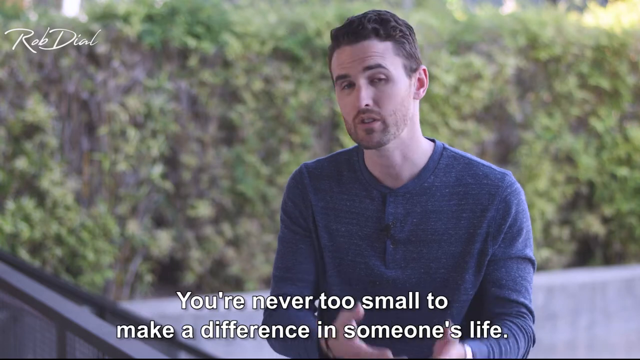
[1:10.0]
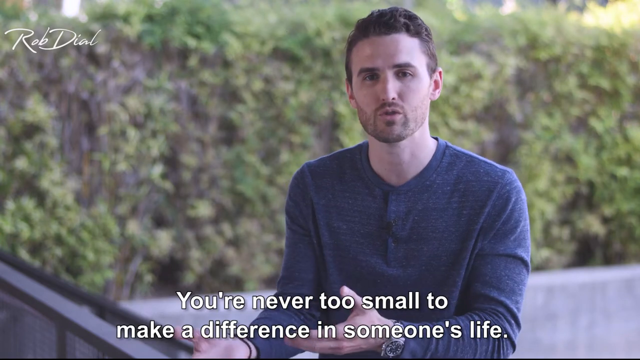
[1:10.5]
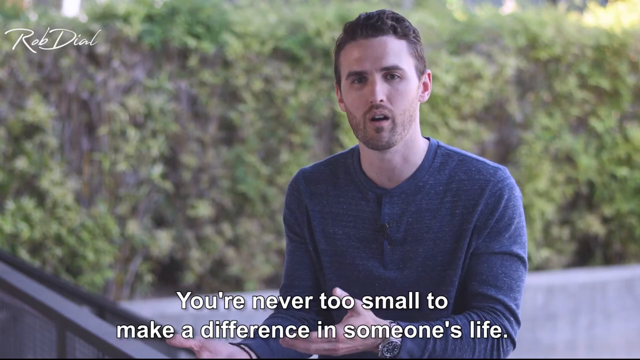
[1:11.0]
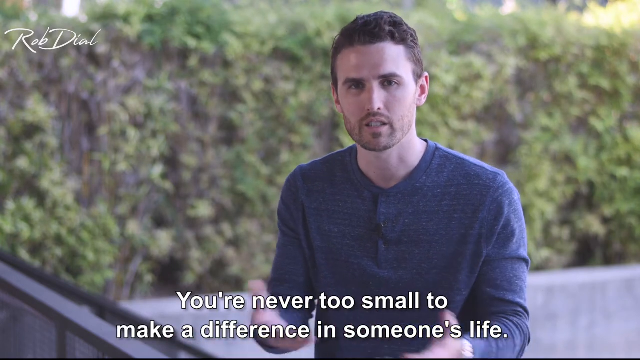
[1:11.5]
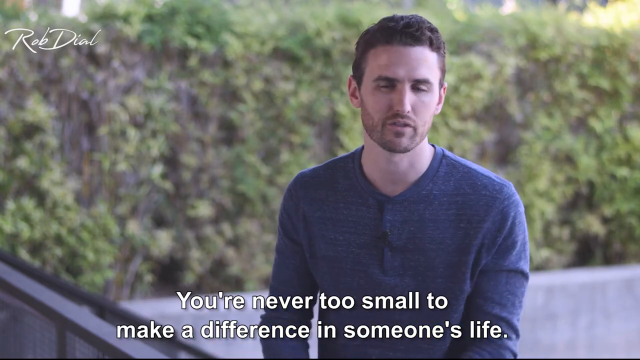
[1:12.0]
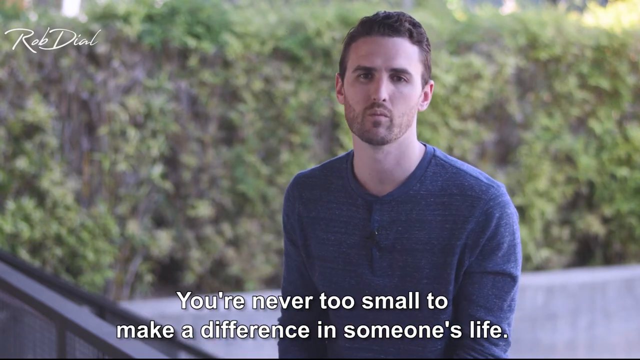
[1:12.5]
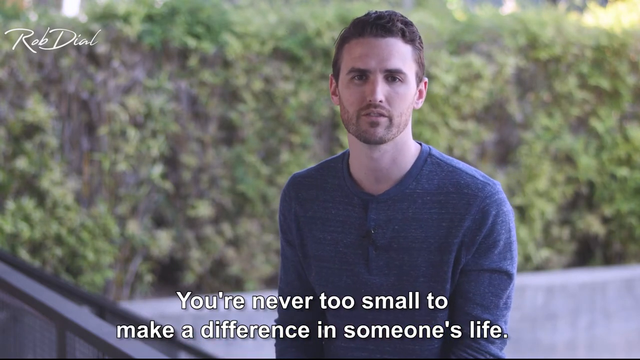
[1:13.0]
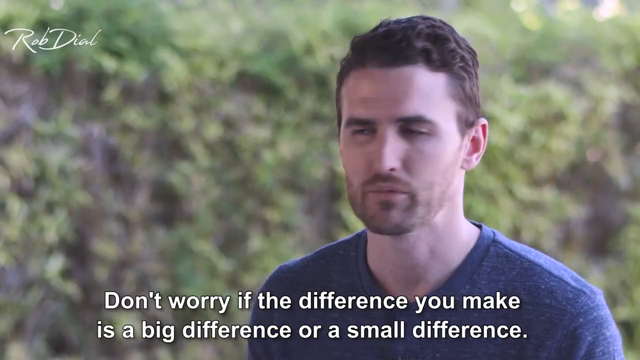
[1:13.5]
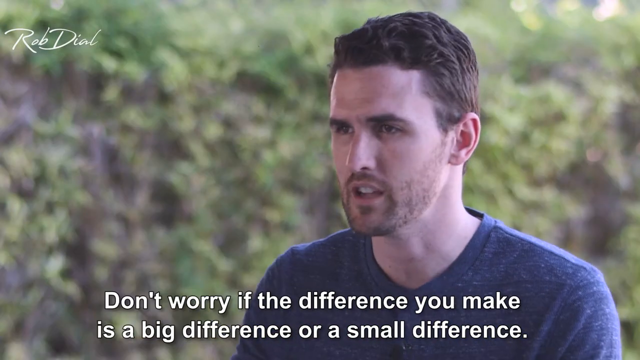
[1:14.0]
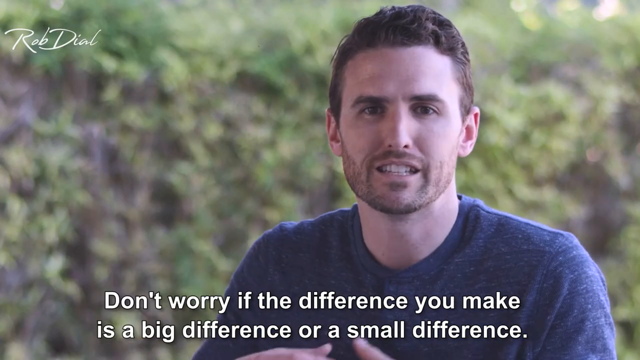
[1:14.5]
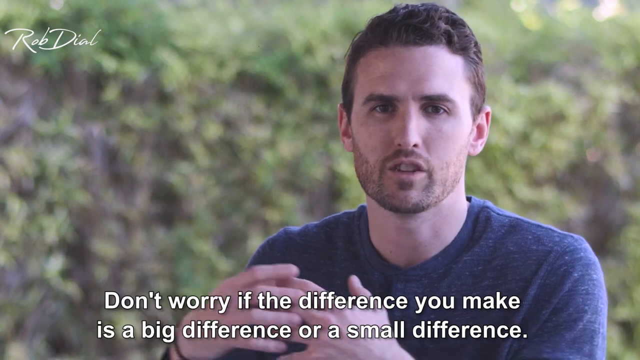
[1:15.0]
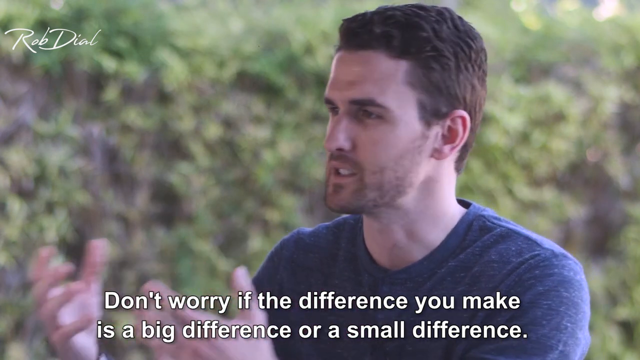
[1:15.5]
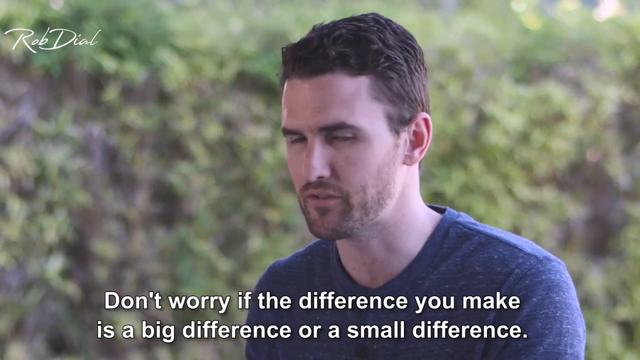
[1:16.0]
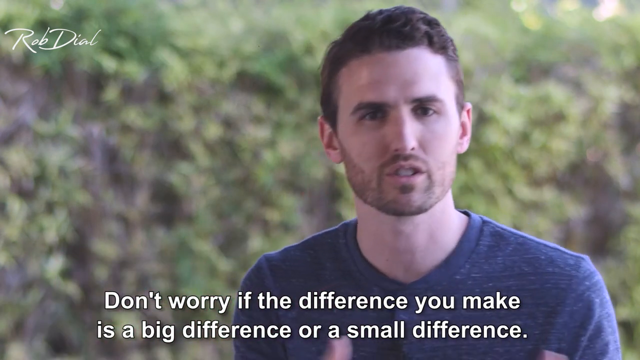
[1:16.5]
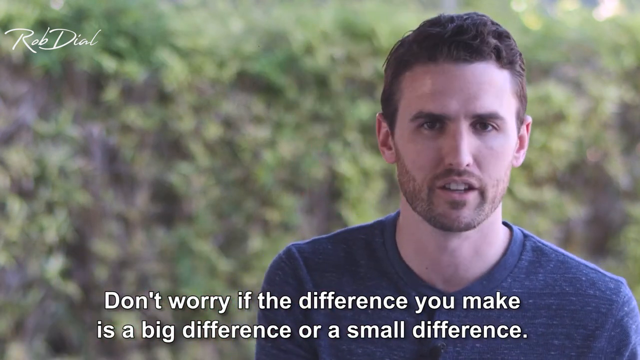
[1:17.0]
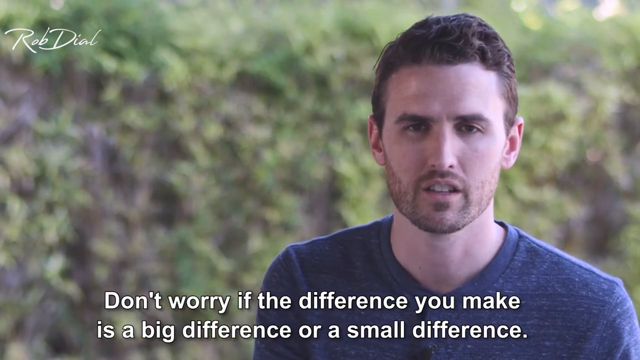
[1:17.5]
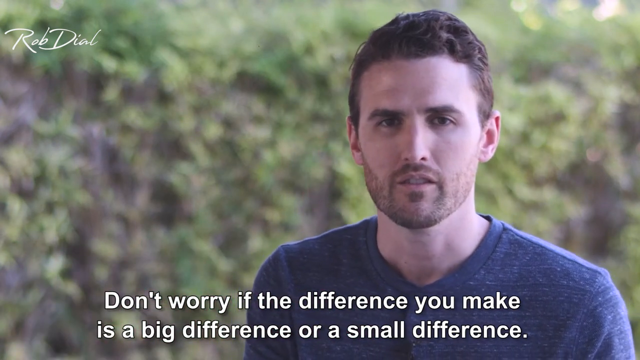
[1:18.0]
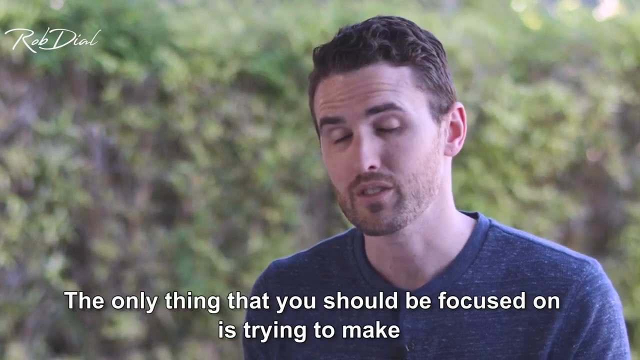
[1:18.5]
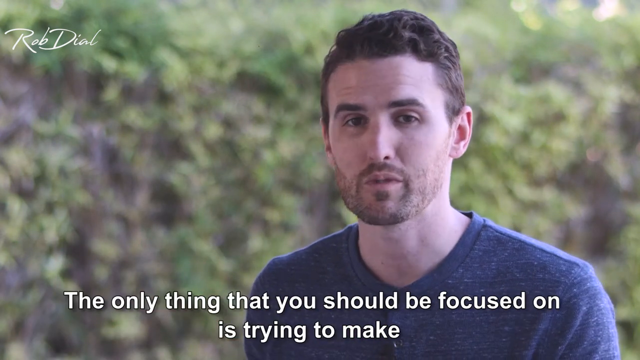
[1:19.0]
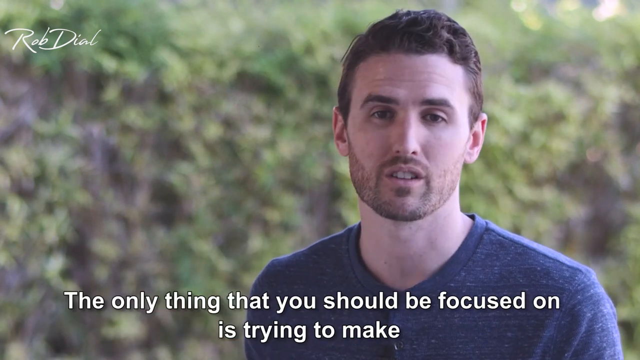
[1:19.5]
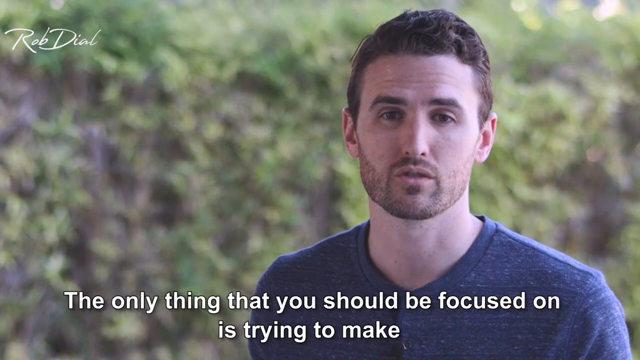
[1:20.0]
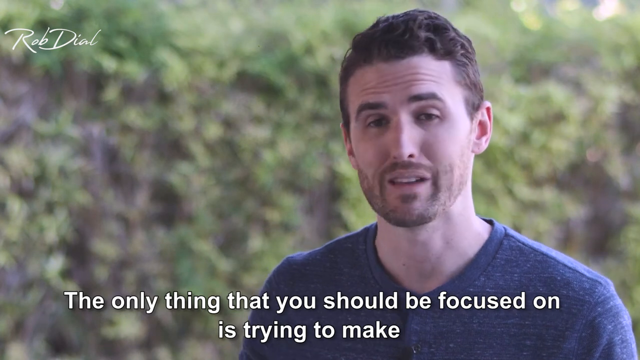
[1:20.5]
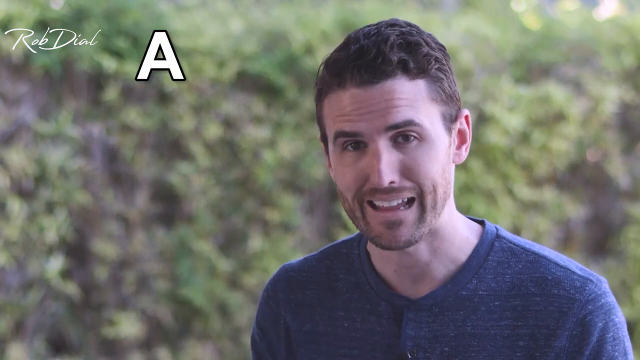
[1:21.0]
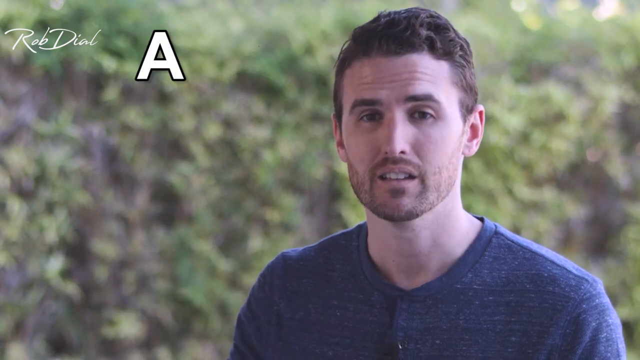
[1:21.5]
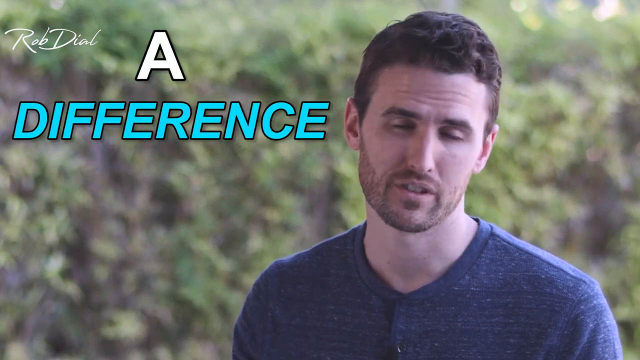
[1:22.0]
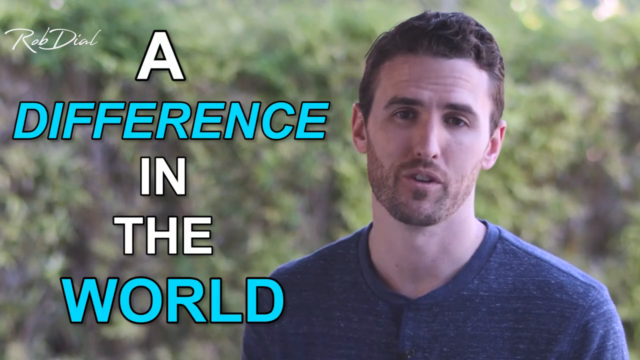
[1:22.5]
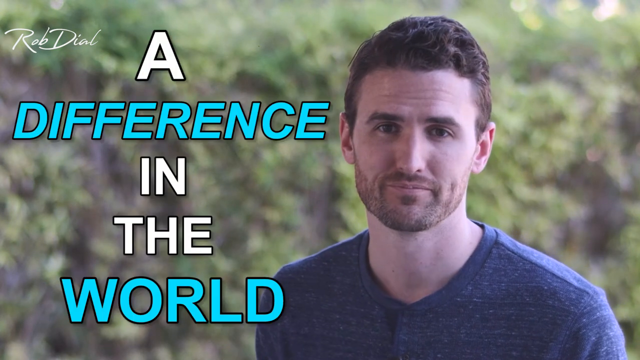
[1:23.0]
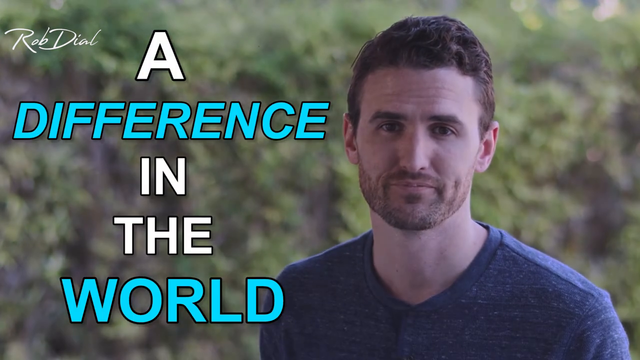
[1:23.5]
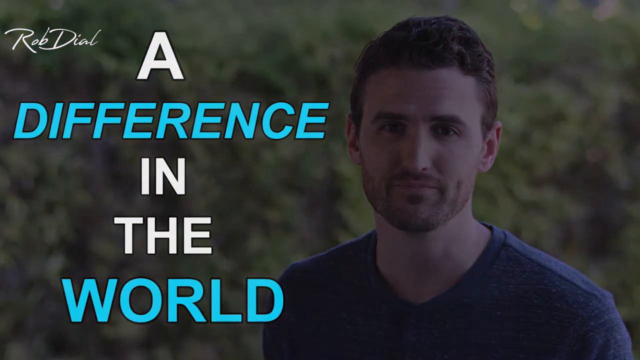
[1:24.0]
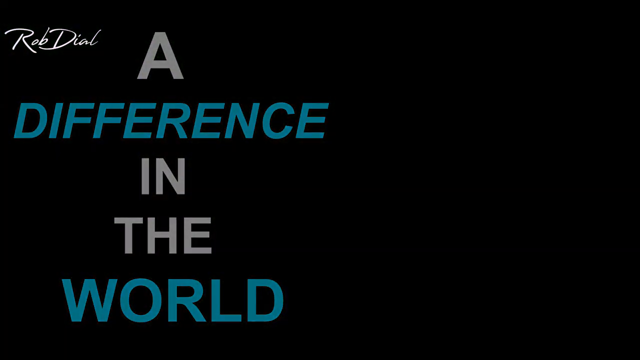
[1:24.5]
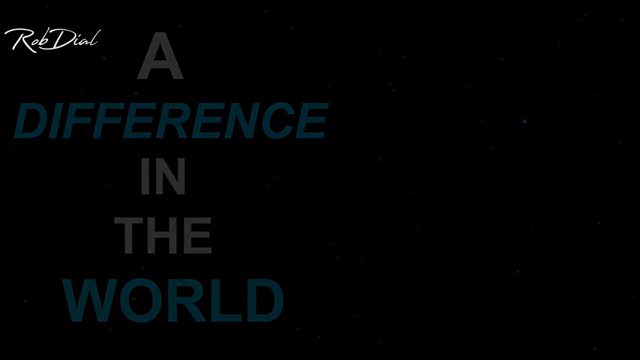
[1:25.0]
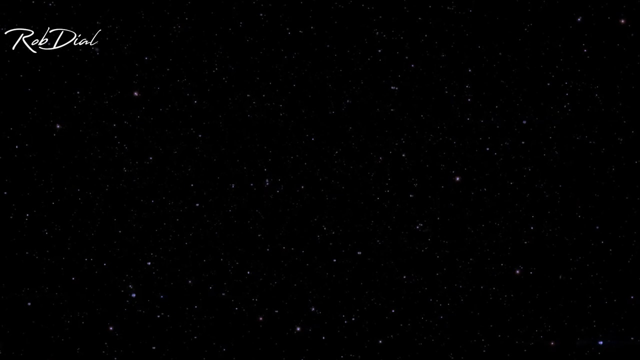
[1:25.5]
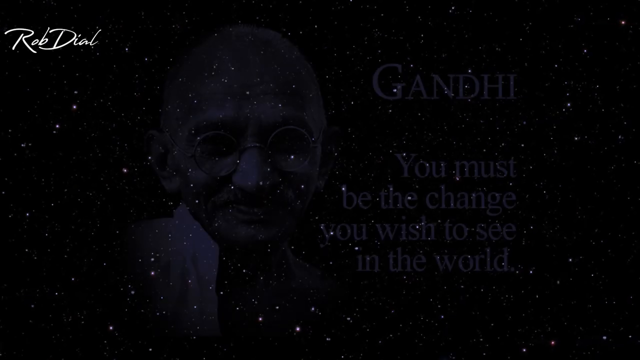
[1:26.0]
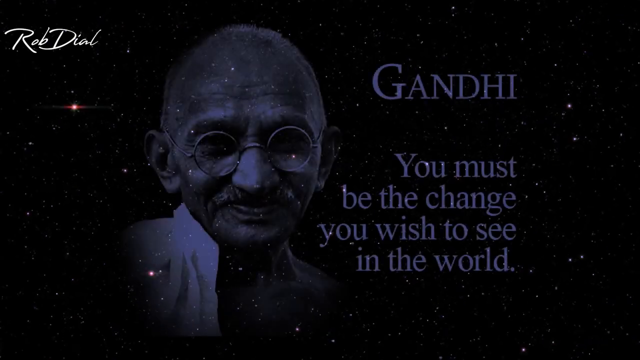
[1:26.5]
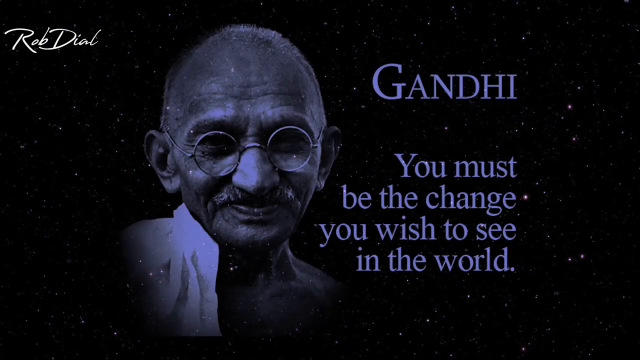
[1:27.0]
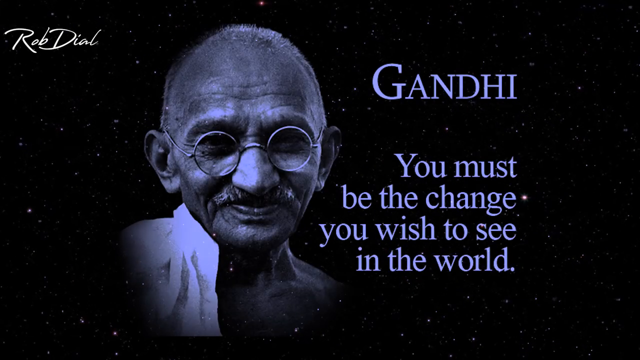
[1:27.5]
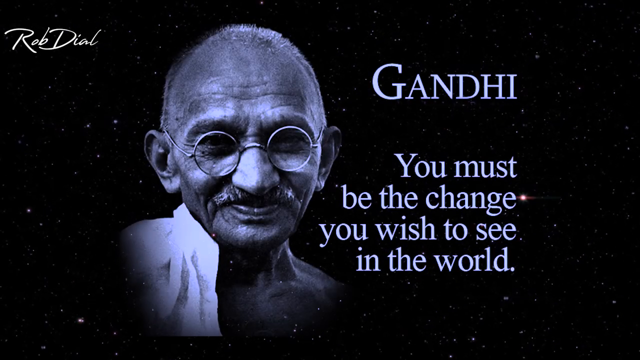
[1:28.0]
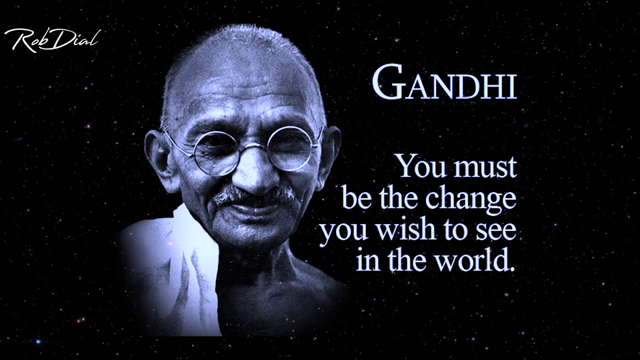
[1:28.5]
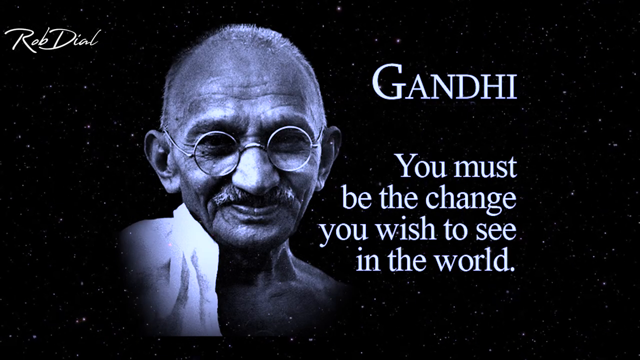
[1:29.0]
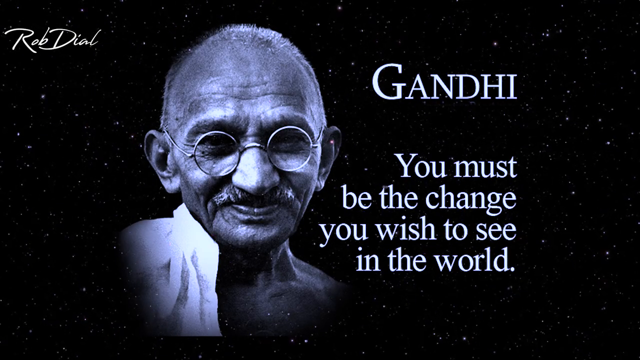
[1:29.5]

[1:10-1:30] As the narrator in the blue shirt continues, the caption at the bottom of the screen reads "you're never too small to make a difference in someone's life. Don't worry if the difference you make is a big difference or a small difference". The camera zooms in on the narrator, and the caption reads "The only thing that you should be focused on is trying to make a difference in the world". The words "a difference in the world" appear beside the man on the left side of the screen, with "difference" and "world" highlighted in blue. The video then cuts to a photograph of Gandhi, who wears round eyeglasses and is smiling, against a black background. To the right of the photo are the words "you must be the change you wish to see in the world".